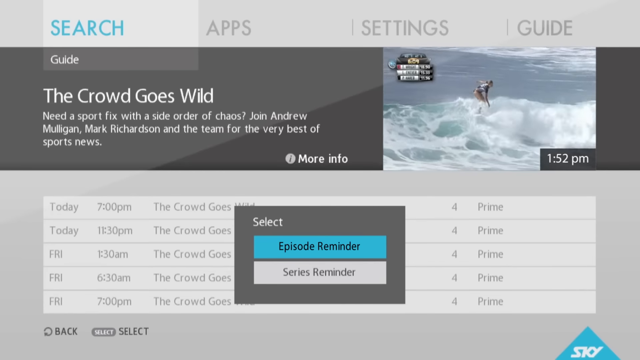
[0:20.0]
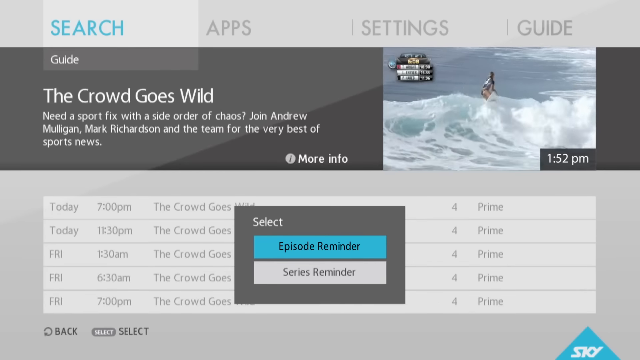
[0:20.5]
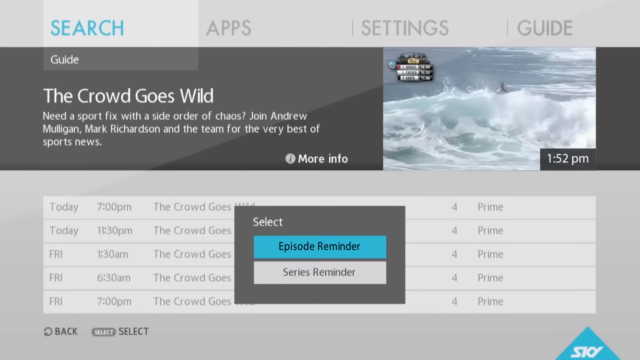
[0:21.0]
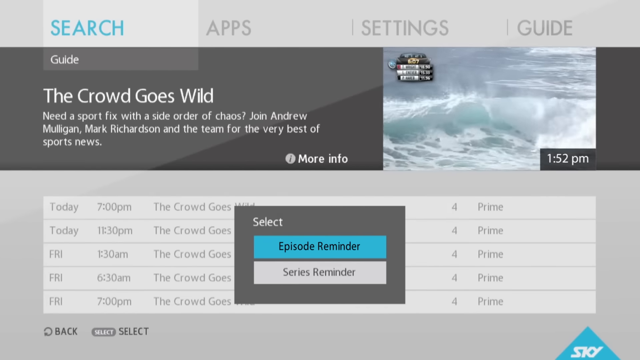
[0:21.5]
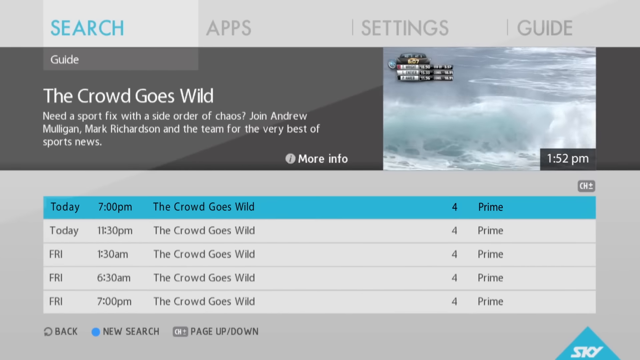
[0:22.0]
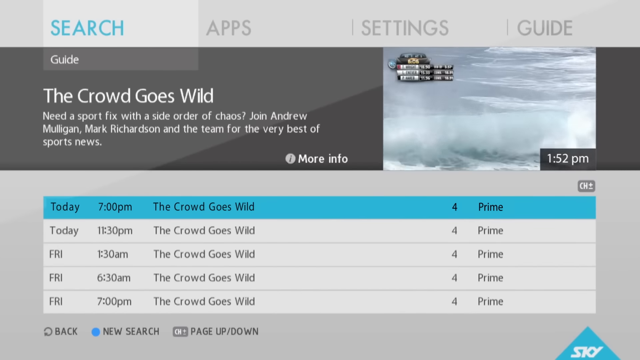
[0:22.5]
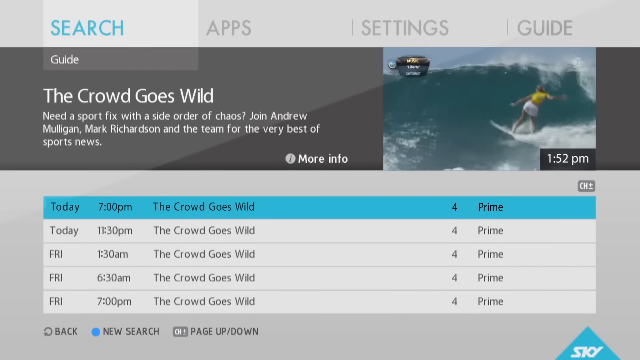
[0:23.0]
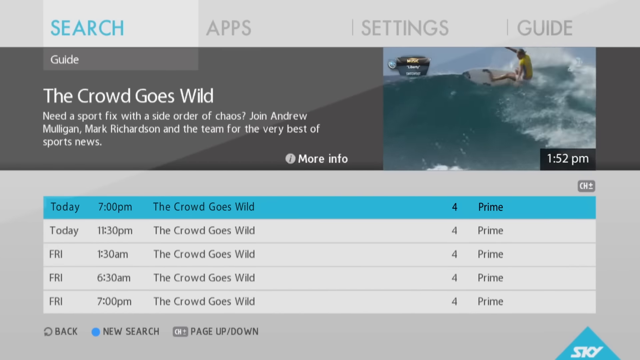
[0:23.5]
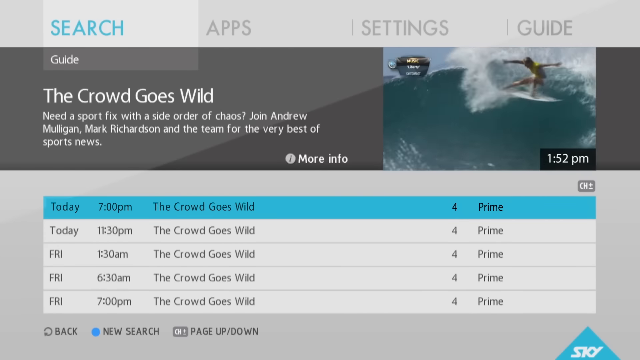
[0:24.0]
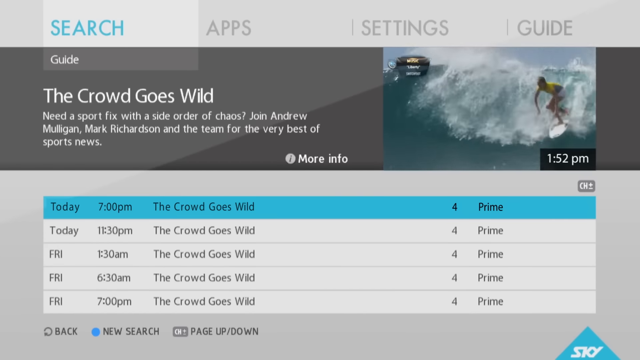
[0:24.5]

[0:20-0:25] After the search for The Crowd Goes Wild, five different recorded episodes of the show are listed on the screen: the first is today at 7 p.m., the second today at 11:30 p.m., the third Friday at 8:30 a.m., the next Friday at 6:30 a.m., and the last Friday at 7 p.m. The top of the screen shows the words "Search", "Apps", "Settings" and "Guide". Under this it says "The Crowd Goes Wild. Need a sport fix with a side order of chaos? Join Andrew Mulligan, Mark Richardson and the team for the very best of sports news." To the right of this, a person is using a surfboard and surfing on the ocean, and under this it says "1:52 p.m."